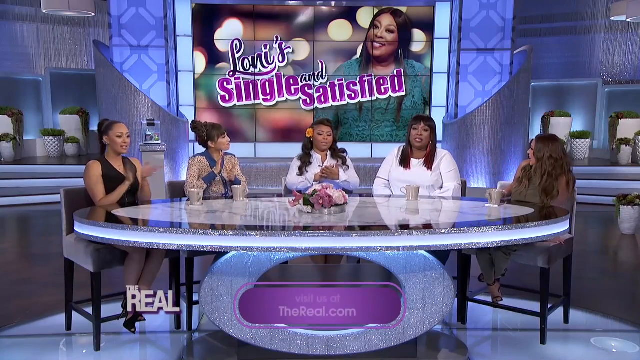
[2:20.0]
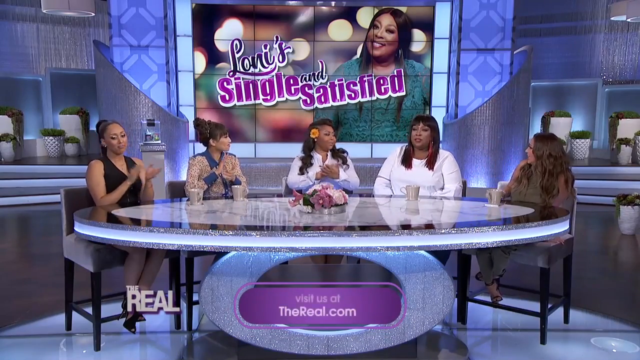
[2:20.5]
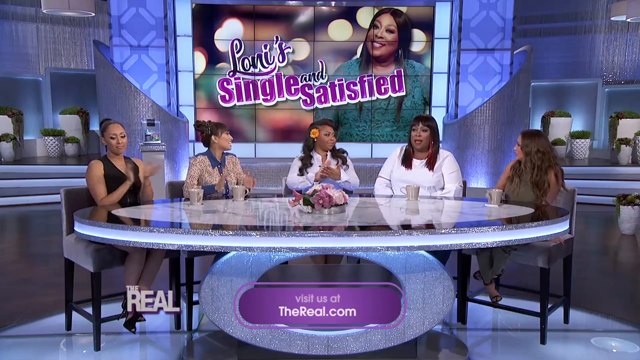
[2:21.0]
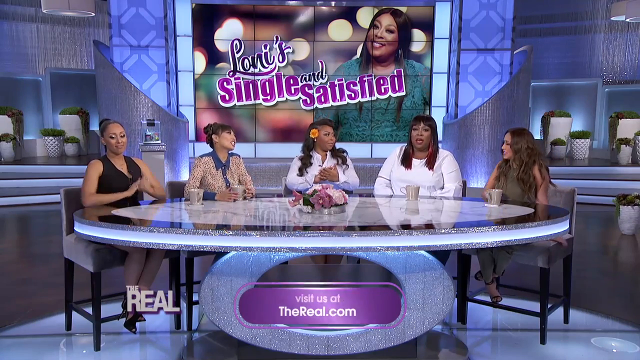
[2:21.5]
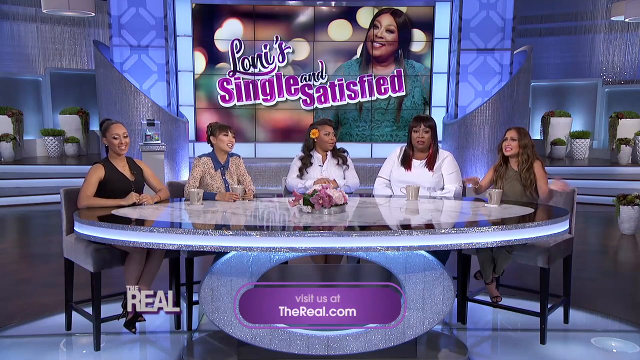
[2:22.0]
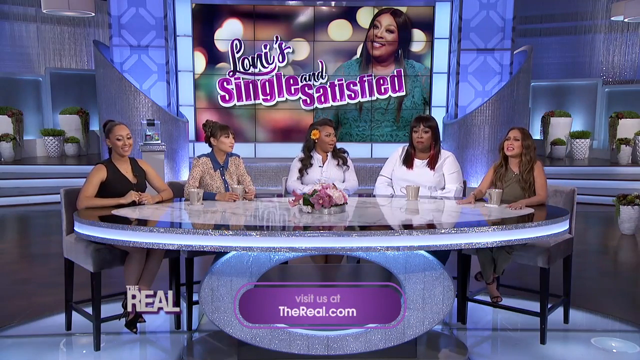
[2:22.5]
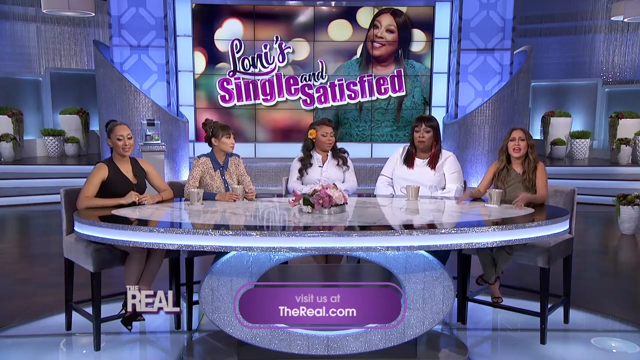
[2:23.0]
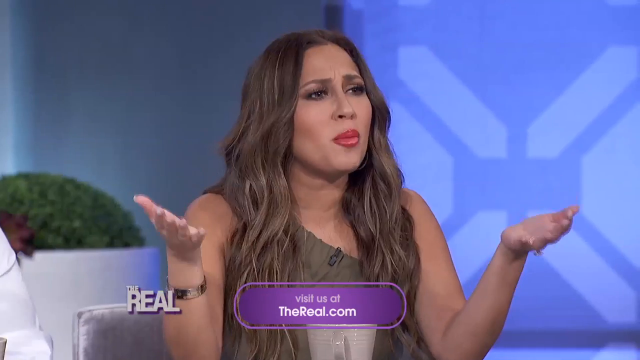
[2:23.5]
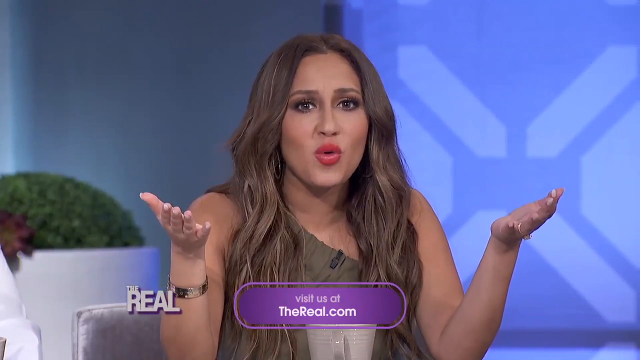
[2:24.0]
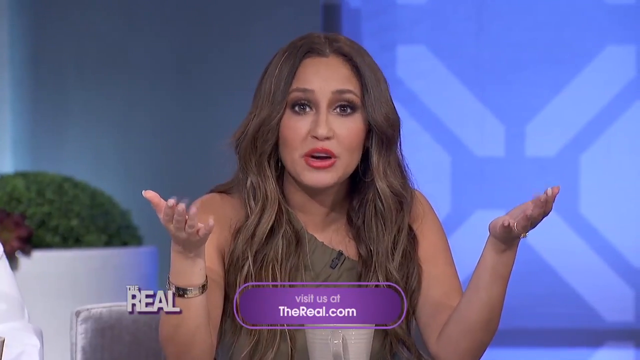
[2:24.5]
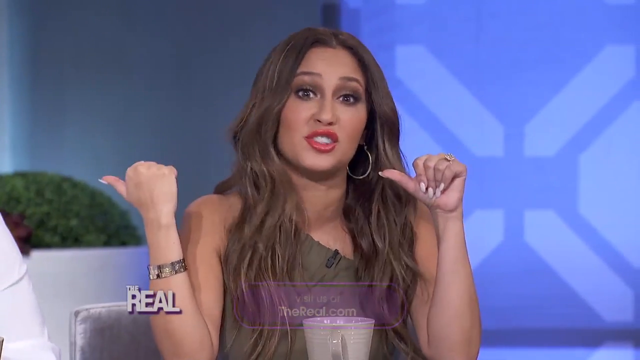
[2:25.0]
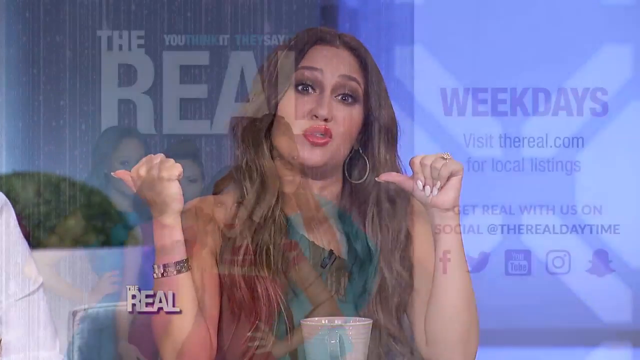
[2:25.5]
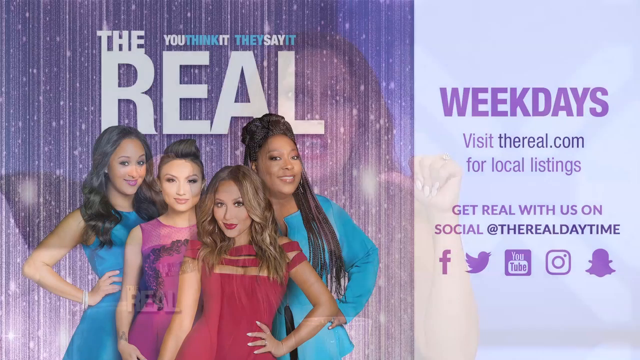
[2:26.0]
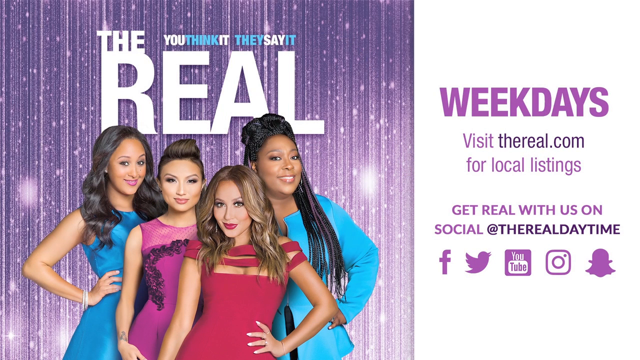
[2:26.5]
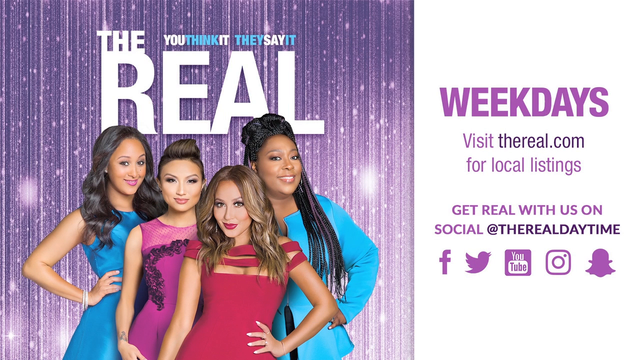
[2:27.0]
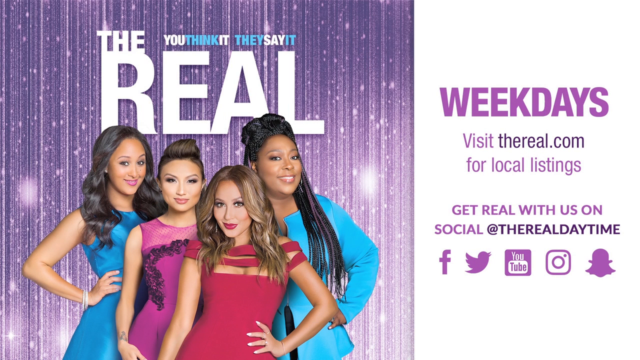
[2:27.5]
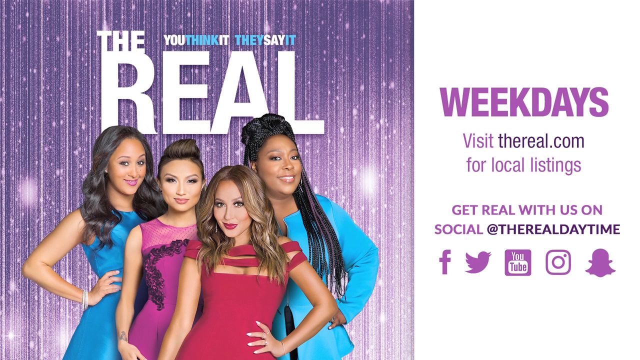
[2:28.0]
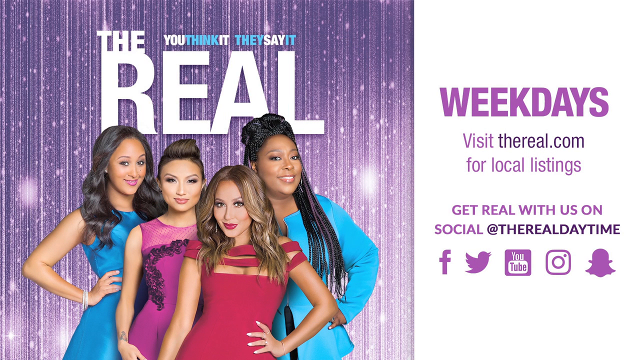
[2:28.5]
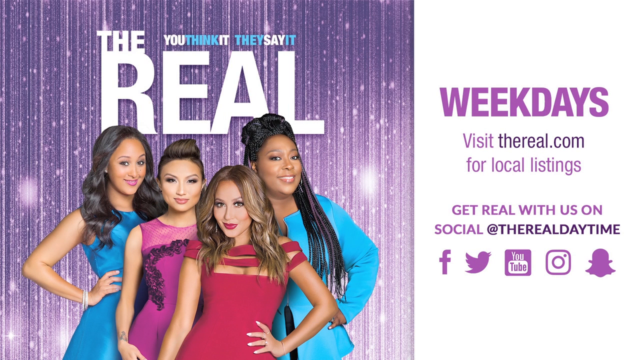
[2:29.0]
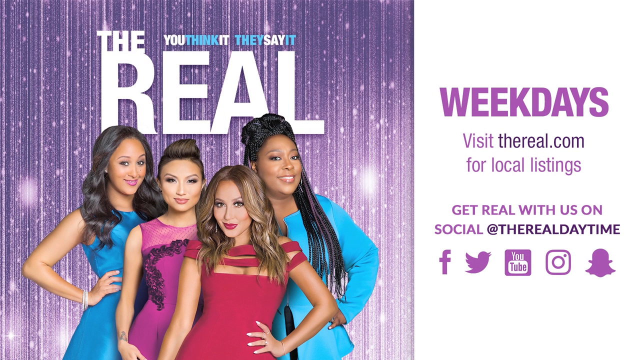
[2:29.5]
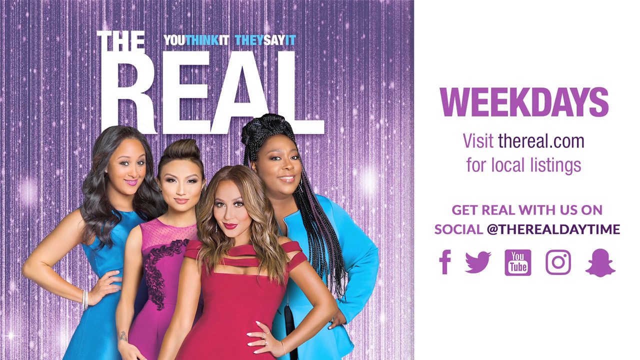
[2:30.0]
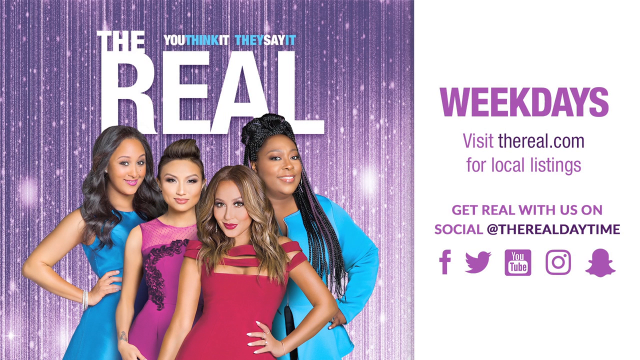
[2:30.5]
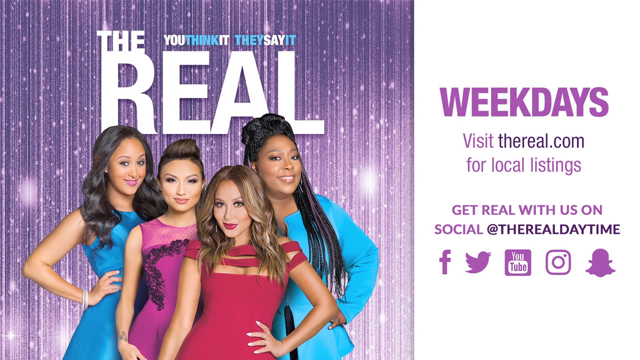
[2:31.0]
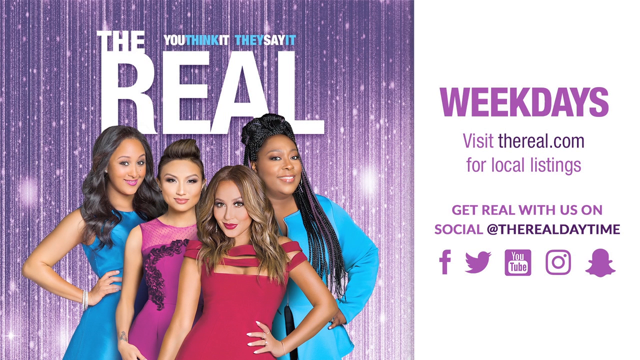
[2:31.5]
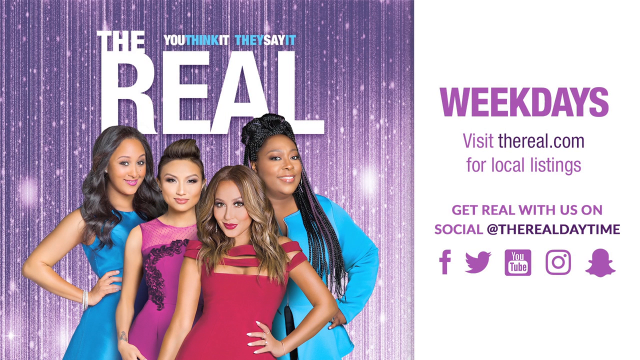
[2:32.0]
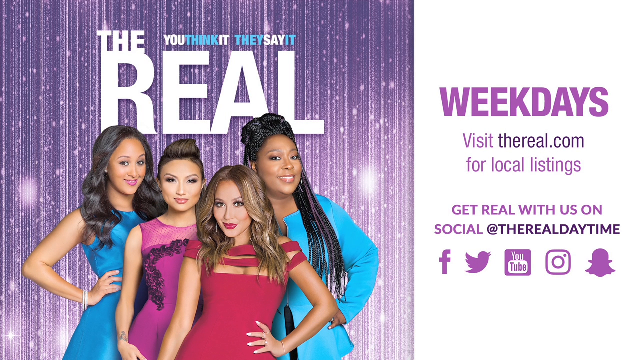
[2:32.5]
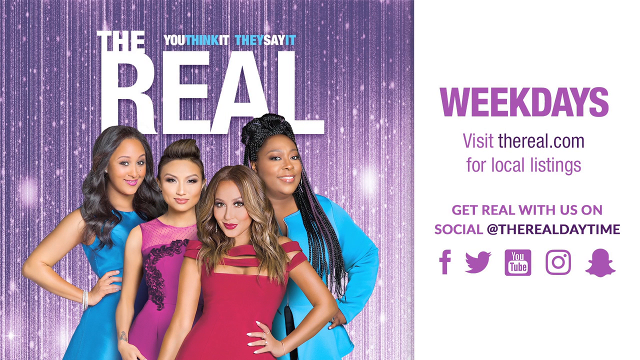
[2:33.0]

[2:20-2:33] All five women are sitting at the table. The three women on the left are clapping, while the woman on the right brings her hands to lay flat on the table in front of her and speaks. She raises her hands with her palms open toward the ceiling, speaking directly to the camera, then closes her fingers with her thumbs out and turns her hands toward the left side to kind of point at the person on her right with her thumbs. A still image follows. The left side of the image, kind of the left two thirds of the frame, shows what looks like an ad for The Real, with kind of a purple background and what seem to be some sort of vertically hanging lights, in front of which four women pose. The right side has a white background with purple and black text that says "weekdays, visit thereal.com for local listings", along with some social media icons.